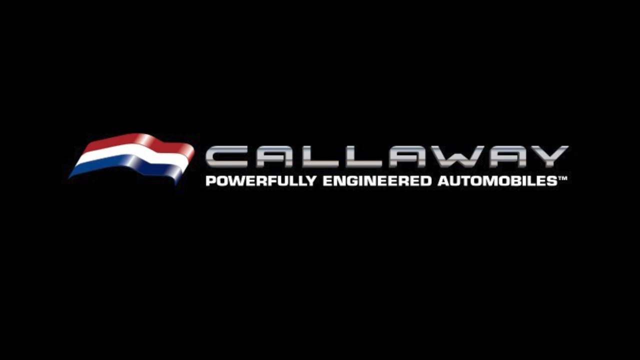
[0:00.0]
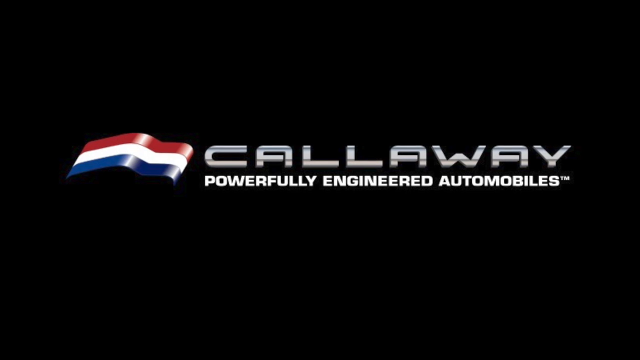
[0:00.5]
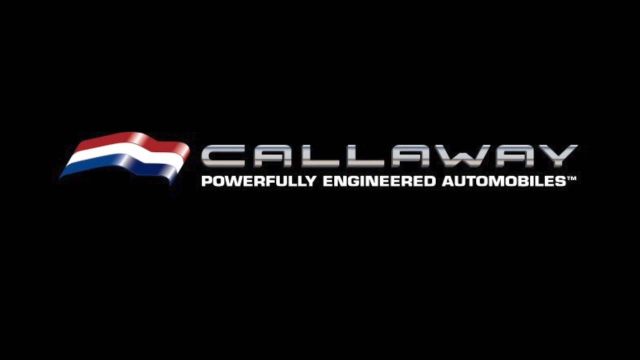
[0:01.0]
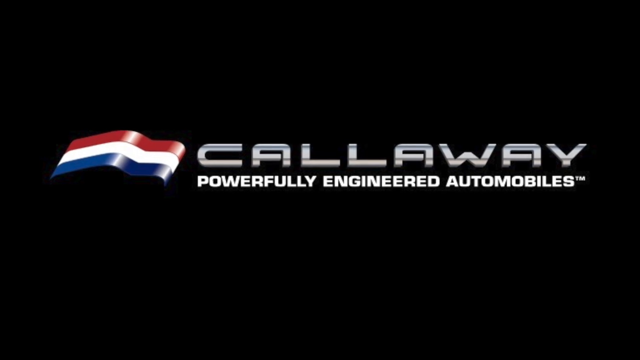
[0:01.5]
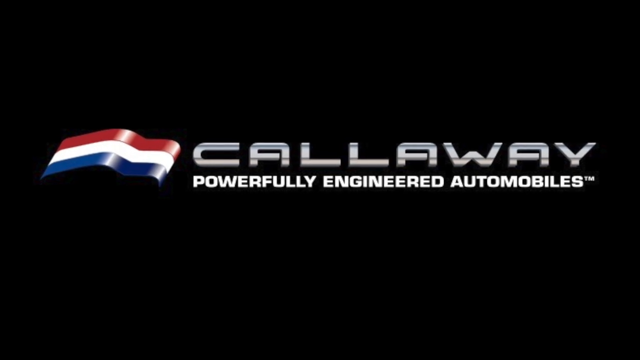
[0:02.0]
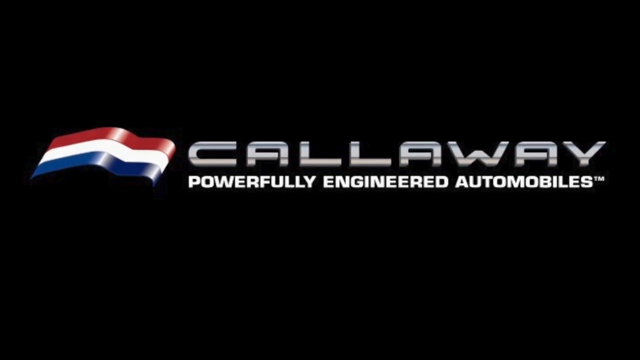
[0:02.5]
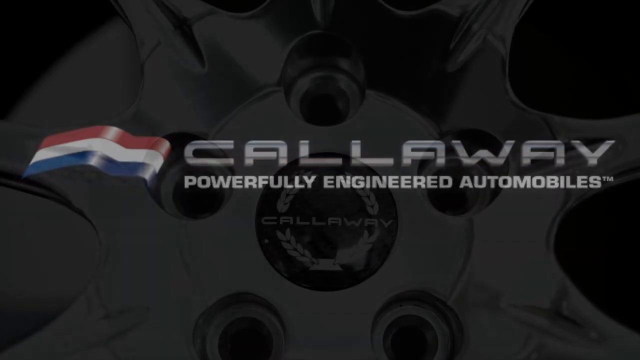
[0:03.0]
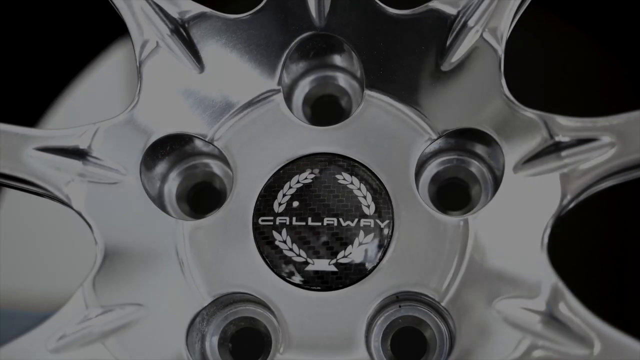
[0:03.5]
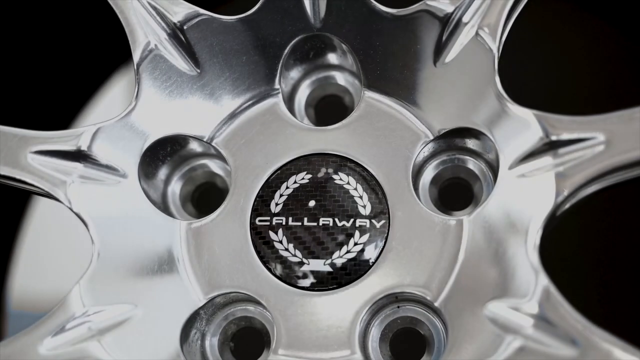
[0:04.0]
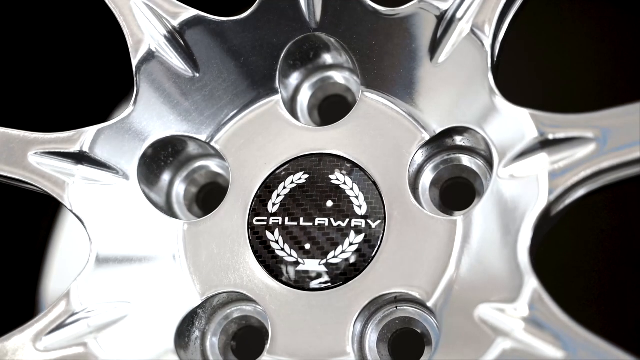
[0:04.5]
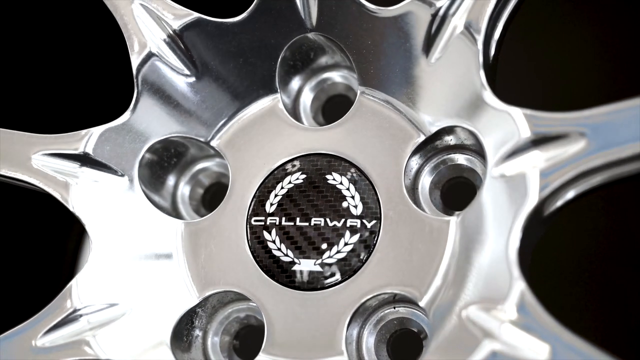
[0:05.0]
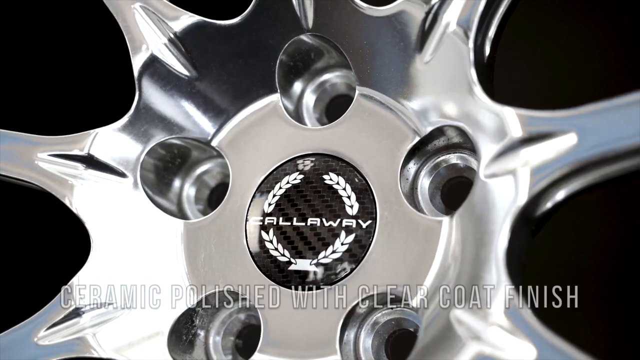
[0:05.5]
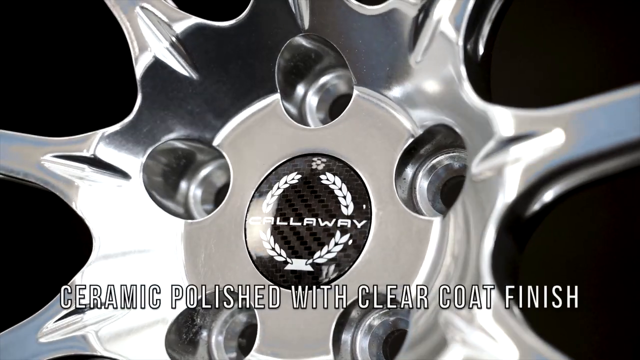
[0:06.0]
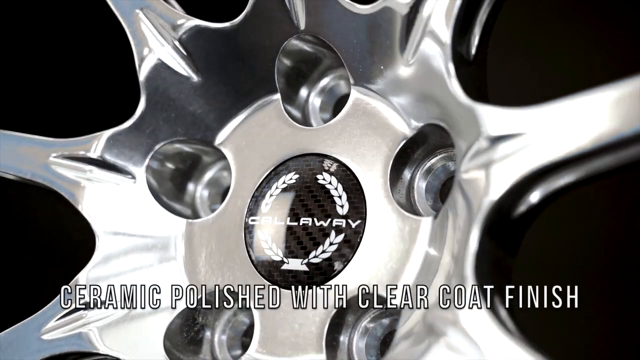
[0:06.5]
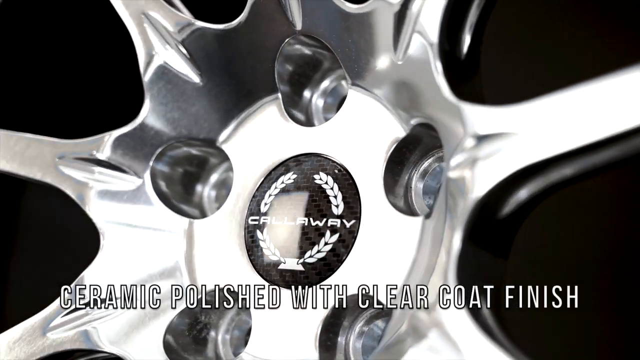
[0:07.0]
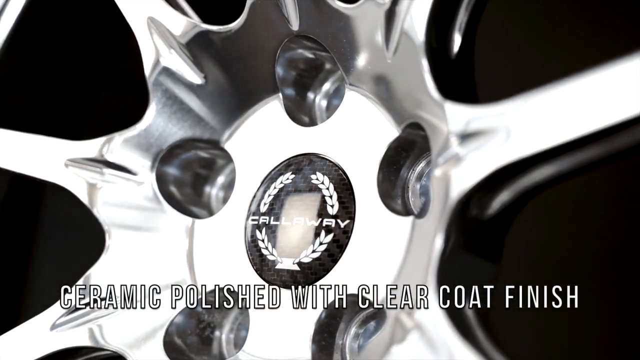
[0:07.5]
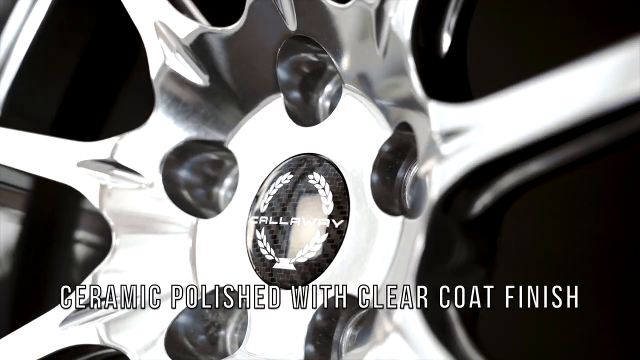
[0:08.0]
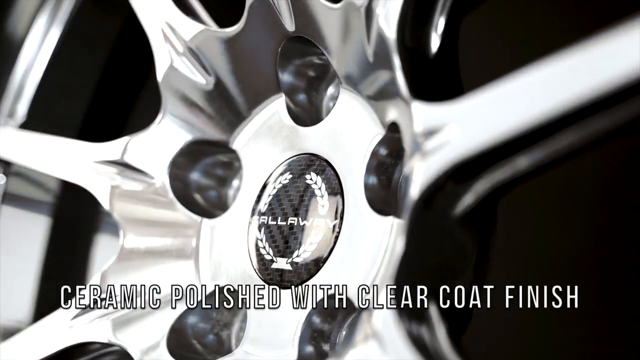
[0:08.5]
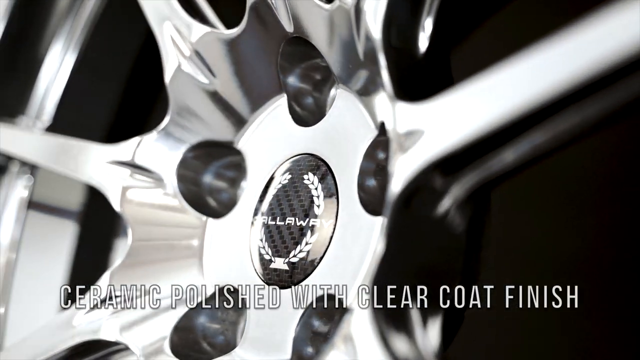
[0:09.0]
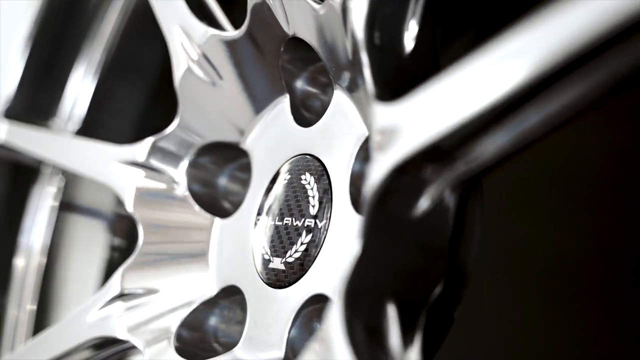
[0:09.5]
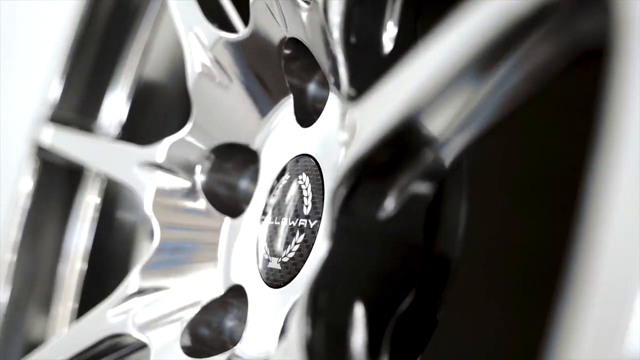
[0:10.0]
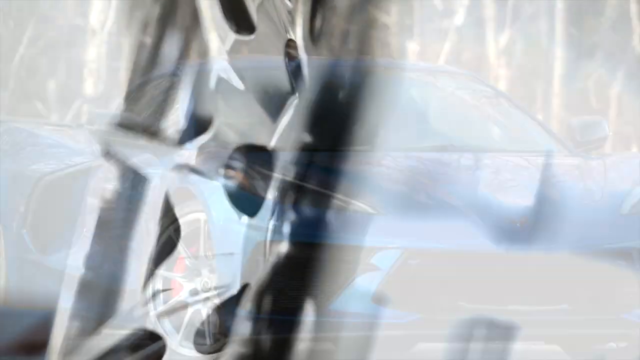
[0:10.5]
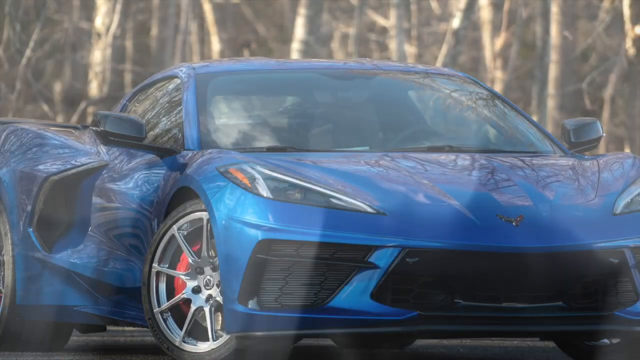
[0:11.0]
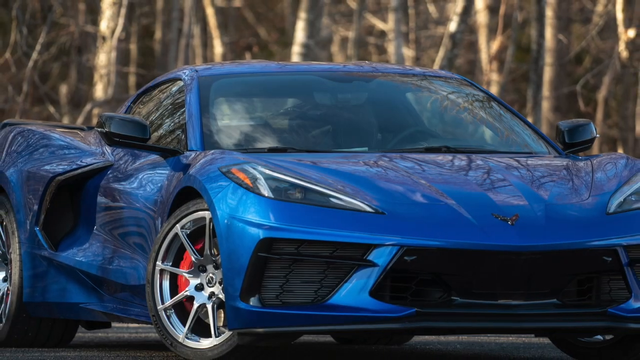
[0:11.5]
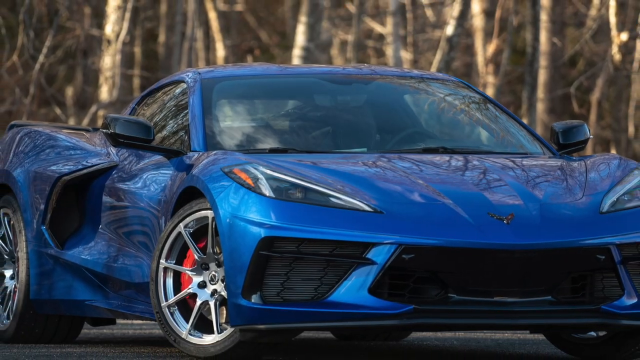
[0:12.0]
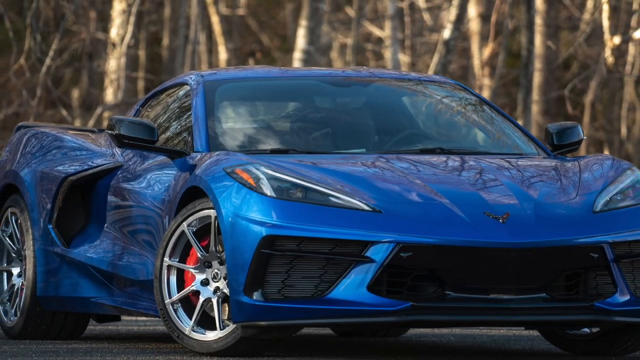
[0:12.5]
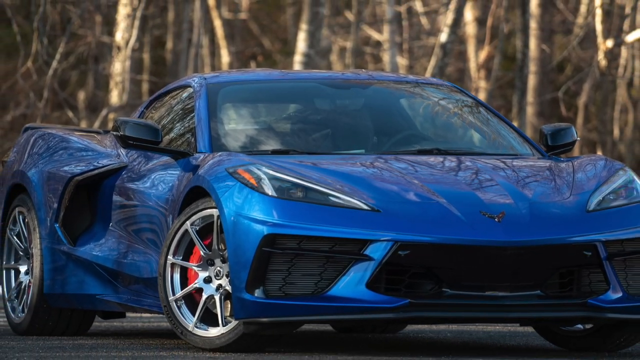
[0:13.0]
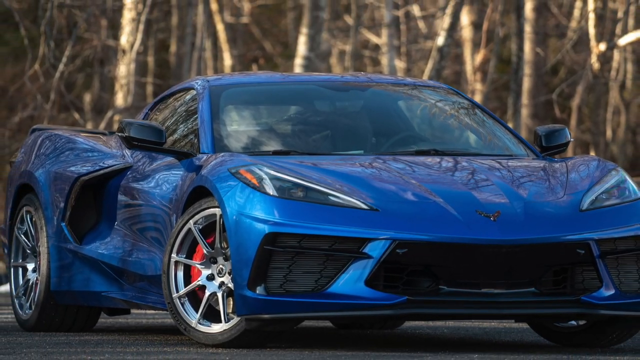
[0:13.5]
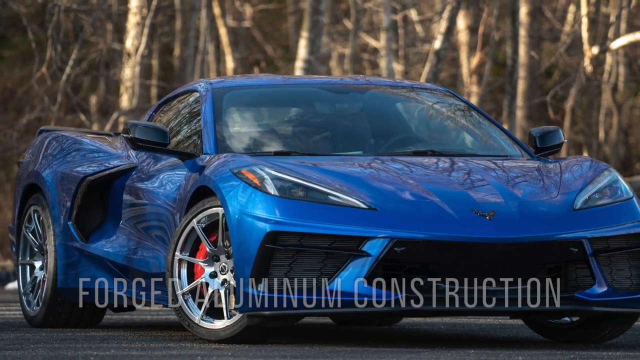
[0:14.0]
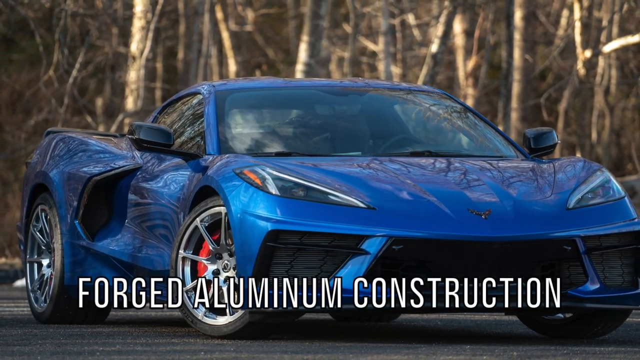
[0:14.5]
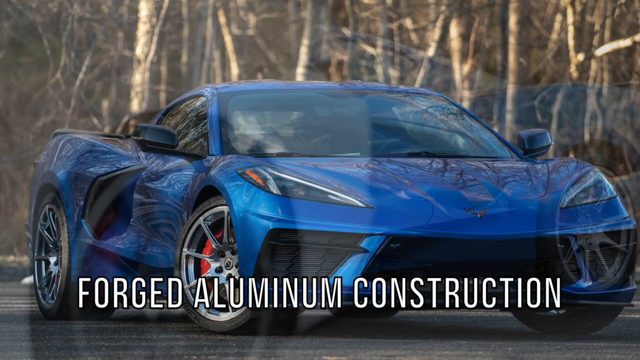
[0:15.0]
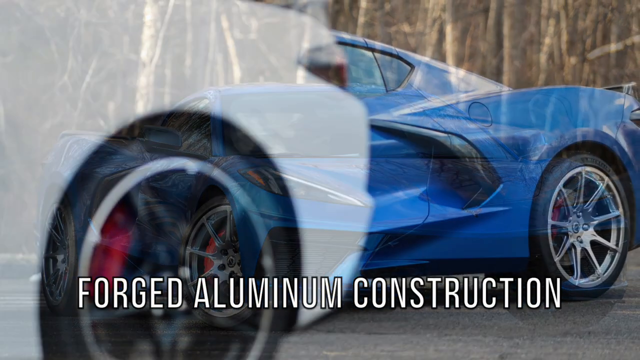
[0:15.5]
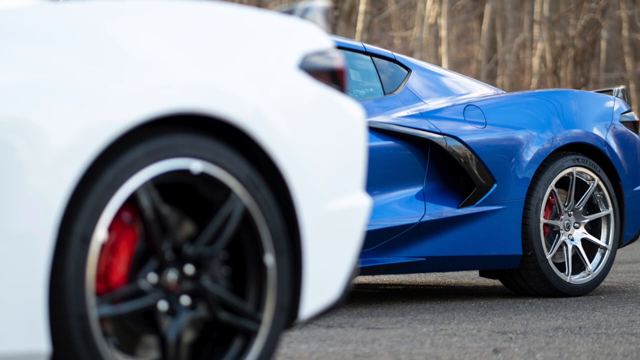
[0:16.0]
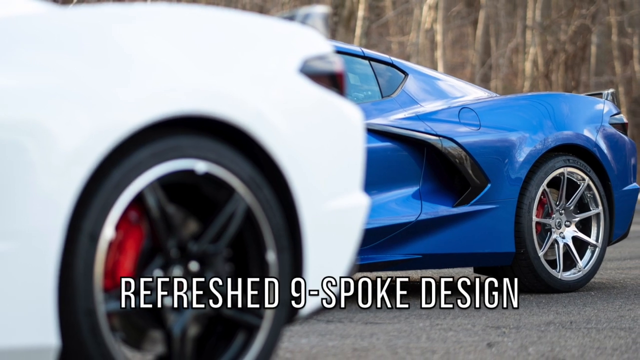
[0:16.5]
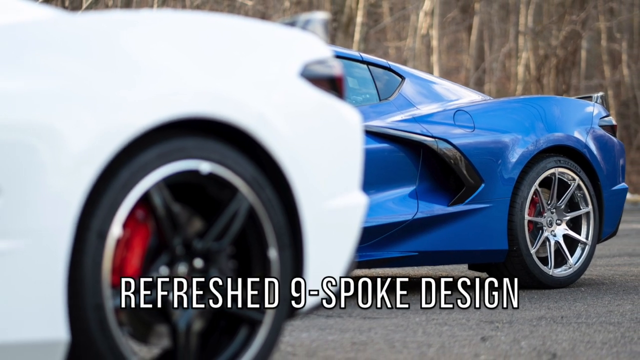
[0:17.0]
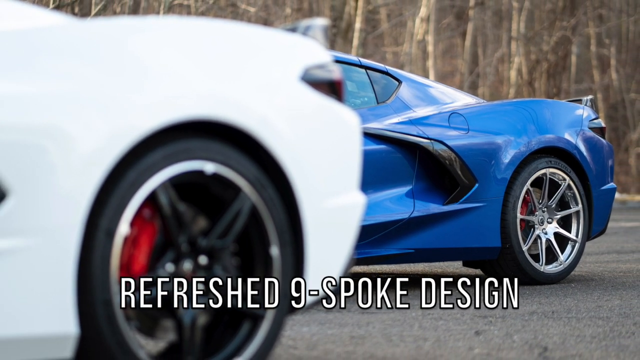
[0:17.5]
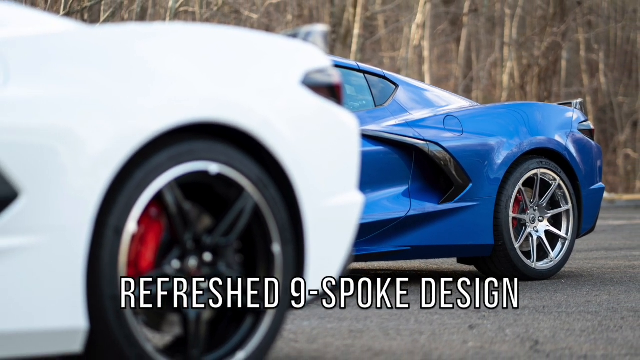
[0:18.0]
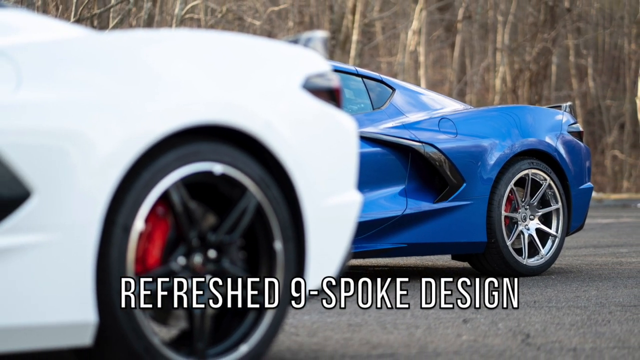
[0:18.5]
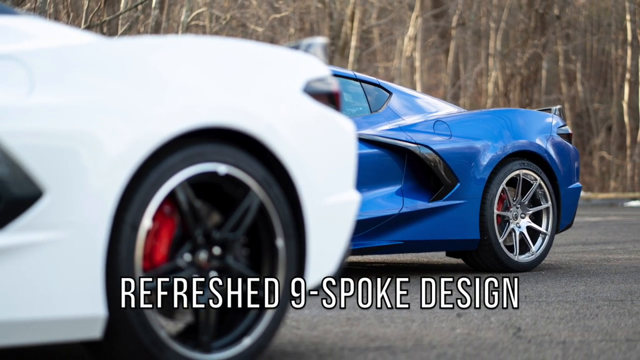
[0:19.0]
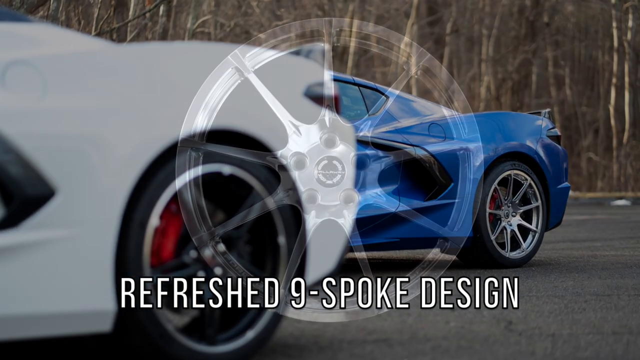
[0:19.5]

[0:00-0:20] The video opens on a logo with the brand name "Callaway Powerfully Engineered Automobiles," with a red, white, and blue flag to its left. It then switches to a car wheel with the Callaway logo in its middle, and text at the bottom of the screen reads "Ceramic polished with clear coat finish." This is a promotional video for Callaway wheels, or rims, for cars. The next screen reads "Forged aluminum construction, refreshed nine-spoke design" and again shows a Callaway wheel. The first wheel has a polished aluminum look, and the second has a dark black polished ceramic look.